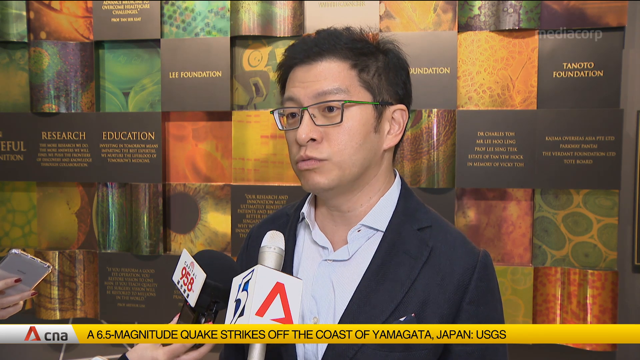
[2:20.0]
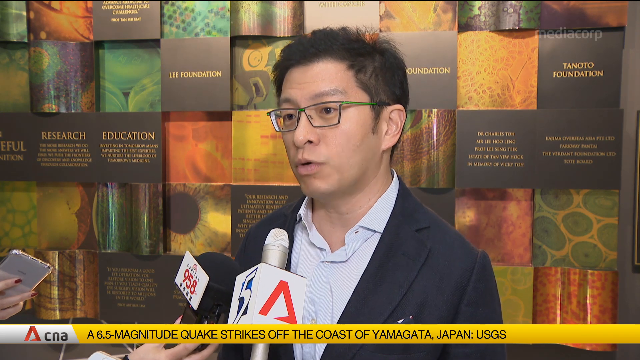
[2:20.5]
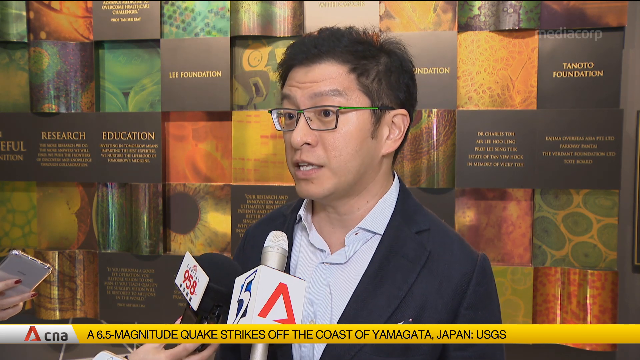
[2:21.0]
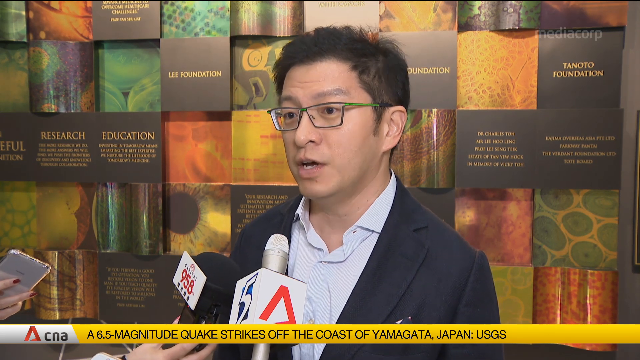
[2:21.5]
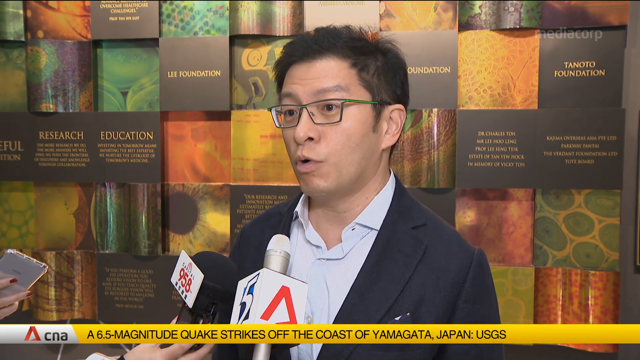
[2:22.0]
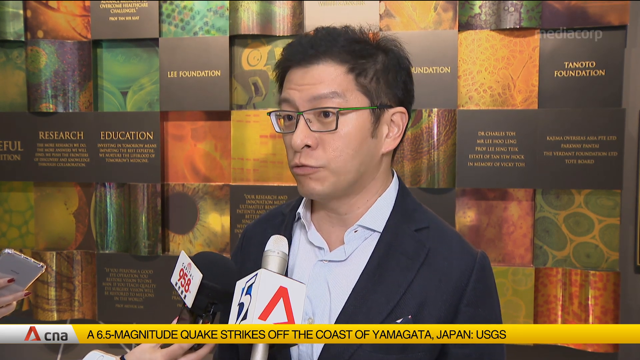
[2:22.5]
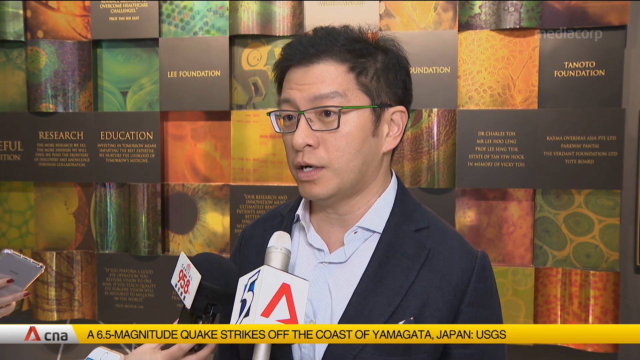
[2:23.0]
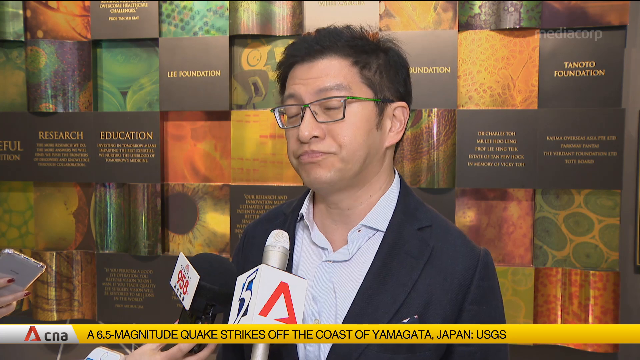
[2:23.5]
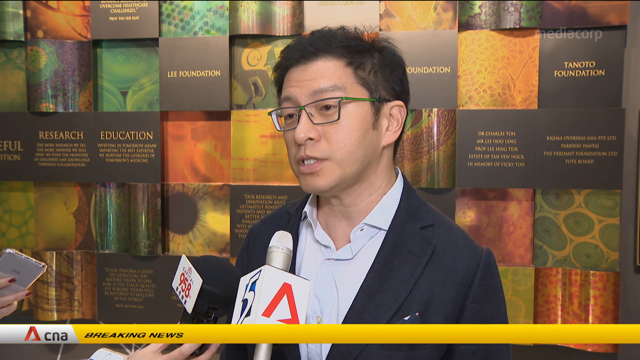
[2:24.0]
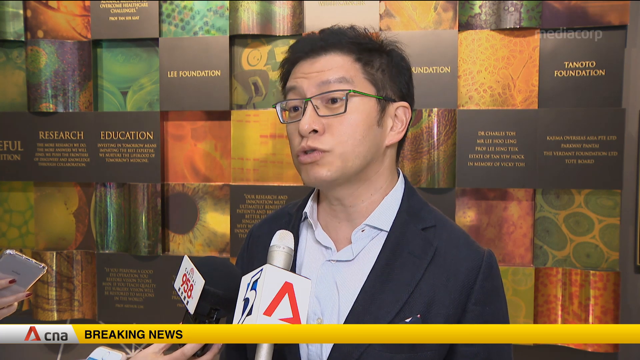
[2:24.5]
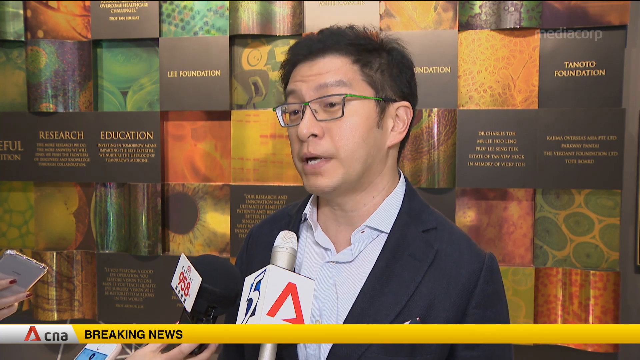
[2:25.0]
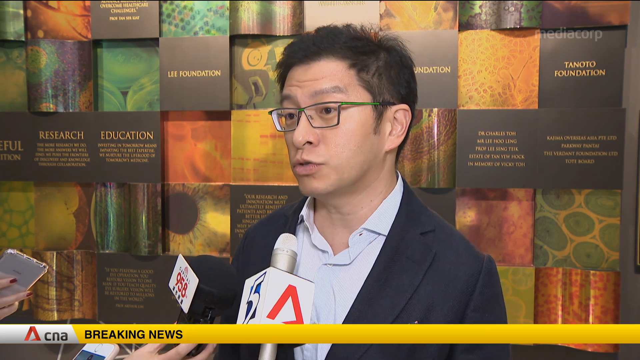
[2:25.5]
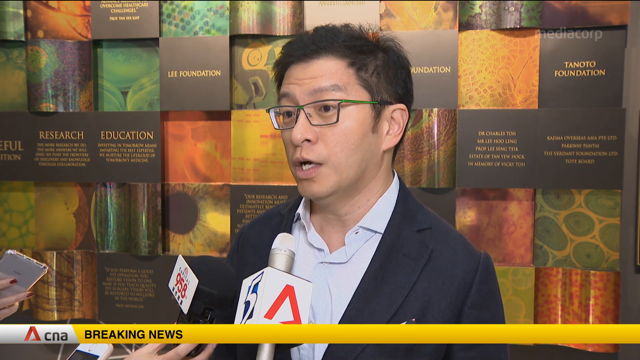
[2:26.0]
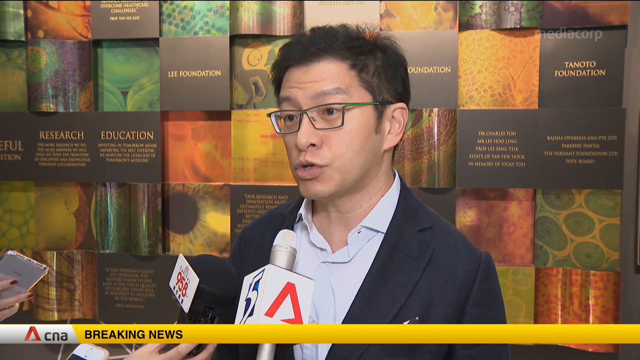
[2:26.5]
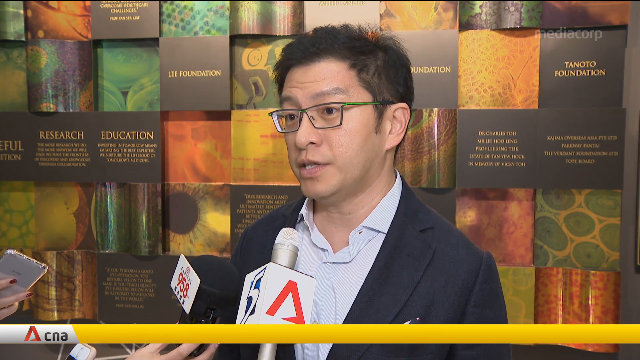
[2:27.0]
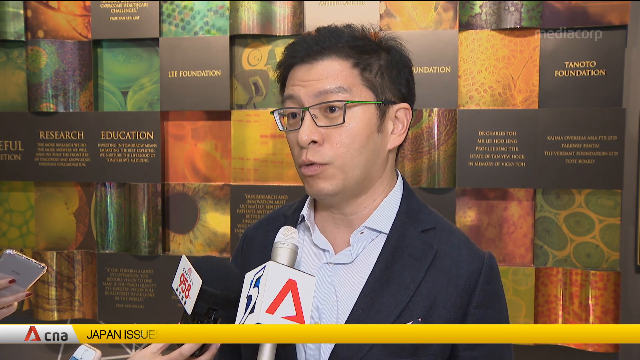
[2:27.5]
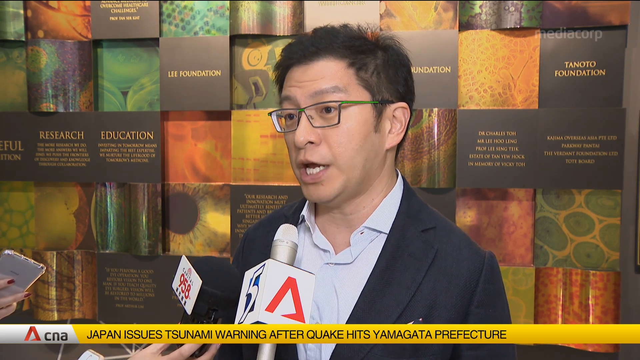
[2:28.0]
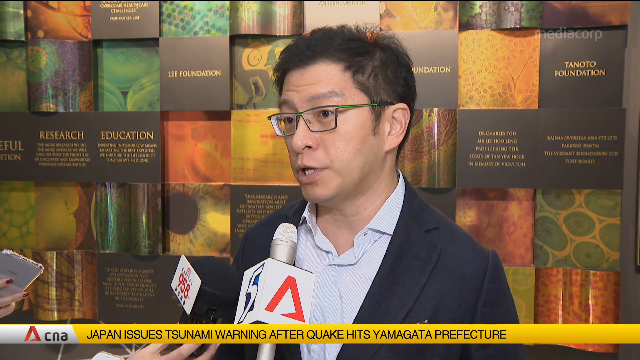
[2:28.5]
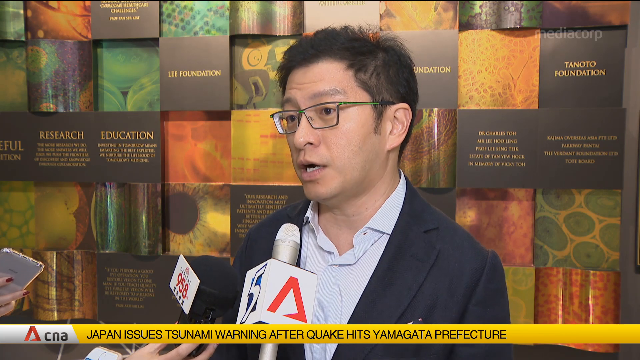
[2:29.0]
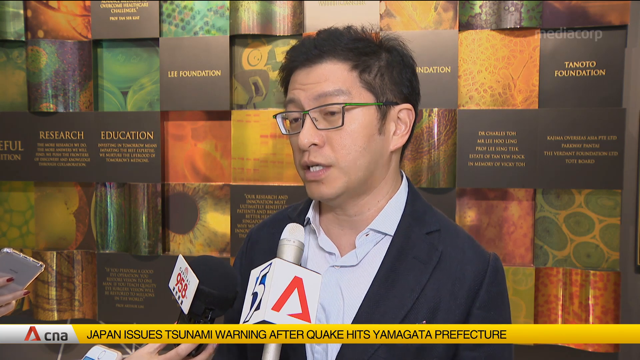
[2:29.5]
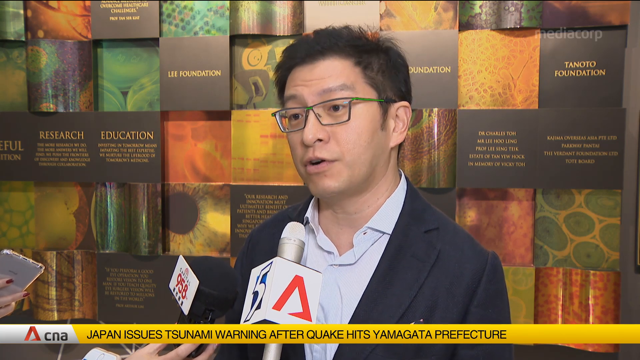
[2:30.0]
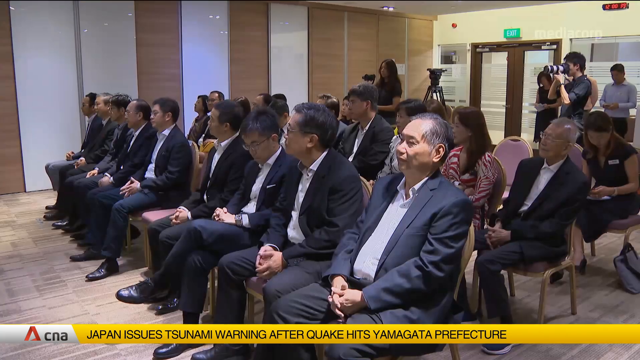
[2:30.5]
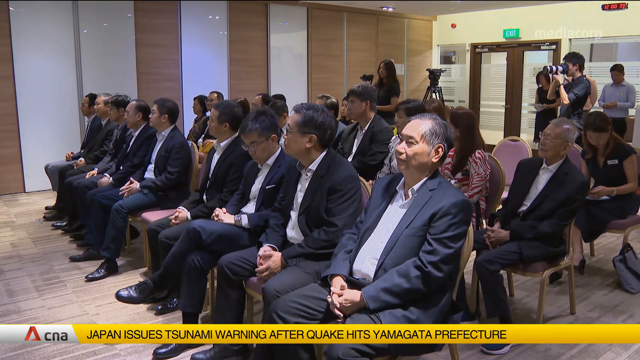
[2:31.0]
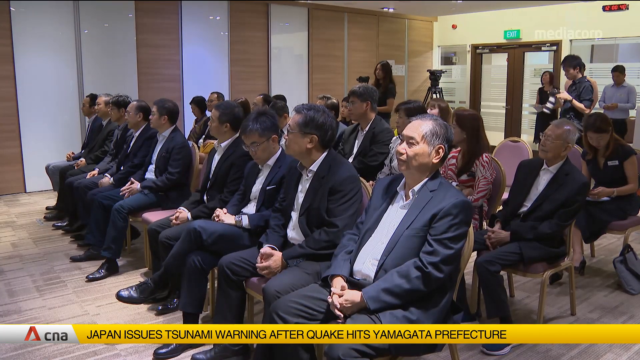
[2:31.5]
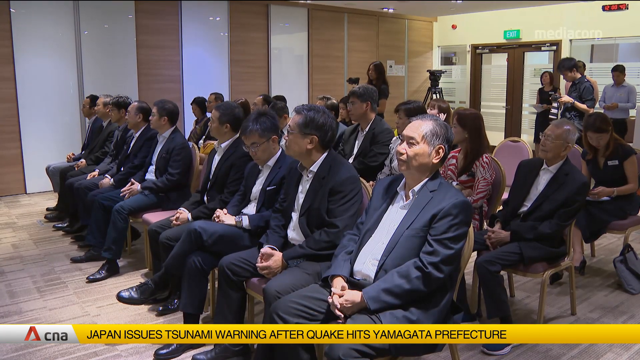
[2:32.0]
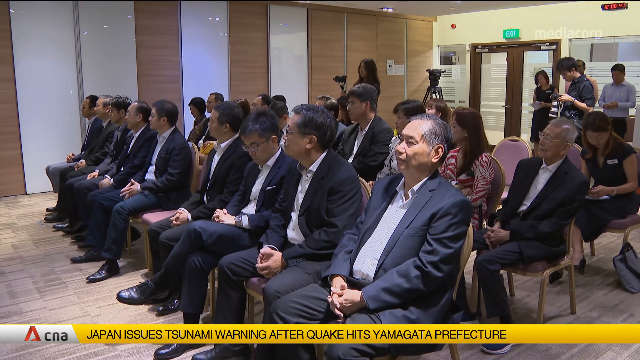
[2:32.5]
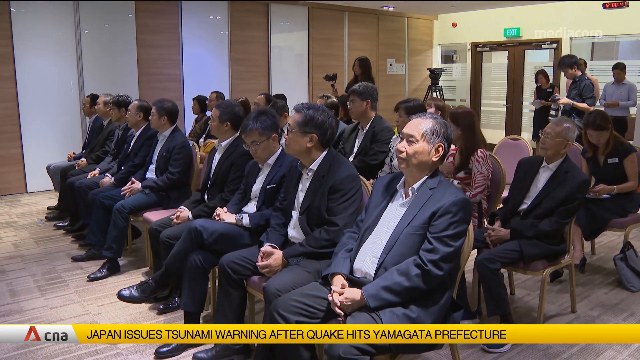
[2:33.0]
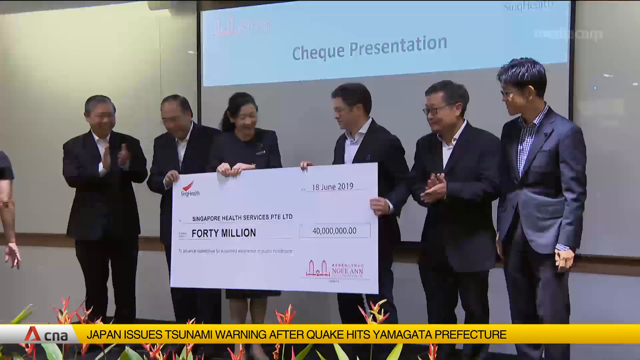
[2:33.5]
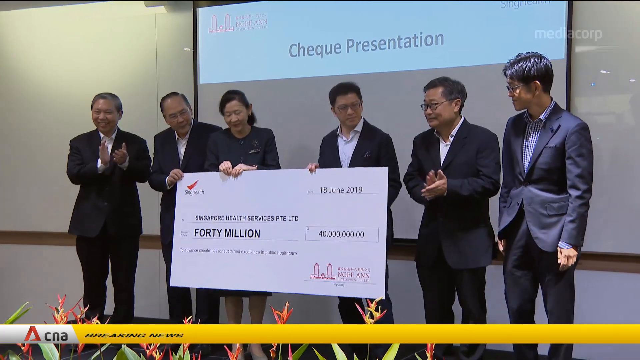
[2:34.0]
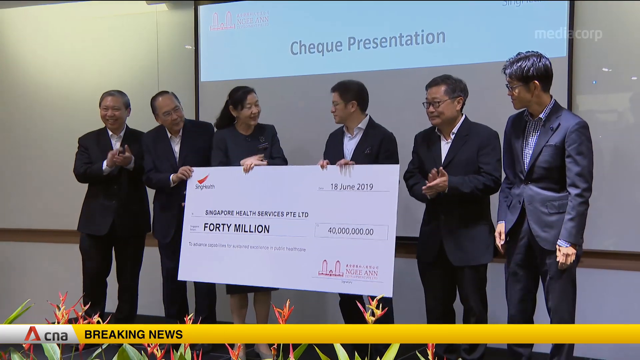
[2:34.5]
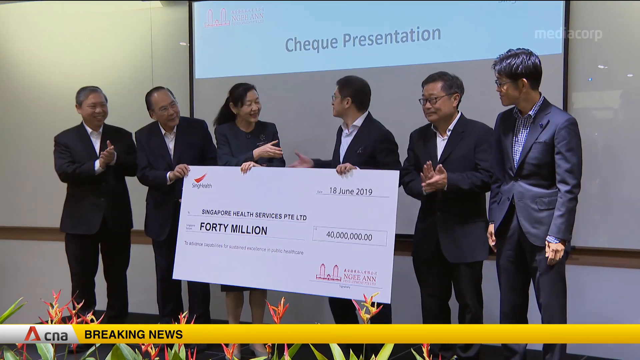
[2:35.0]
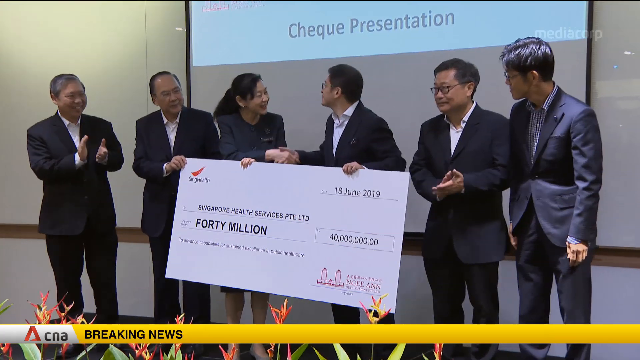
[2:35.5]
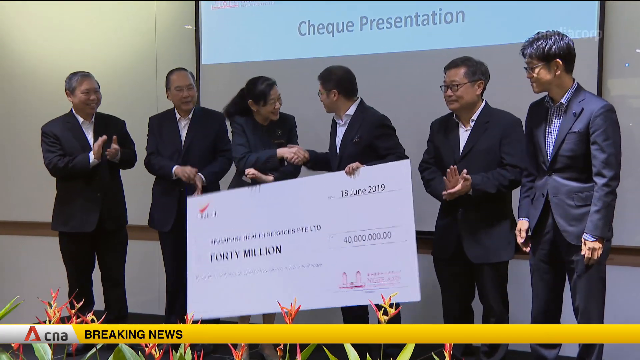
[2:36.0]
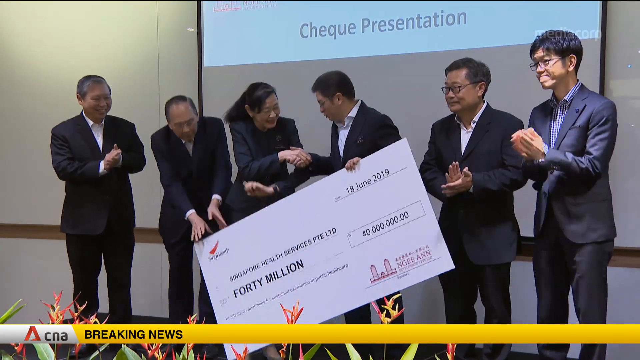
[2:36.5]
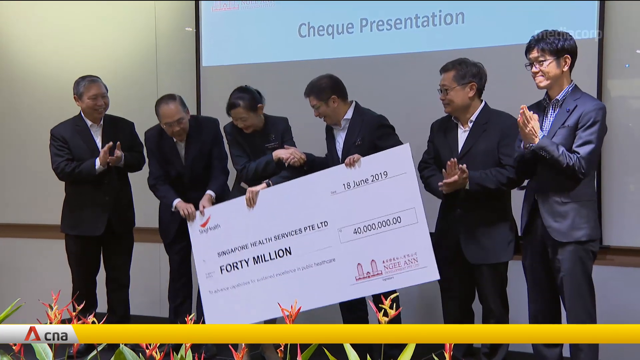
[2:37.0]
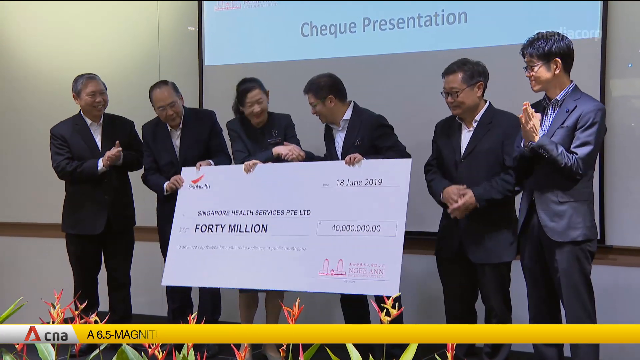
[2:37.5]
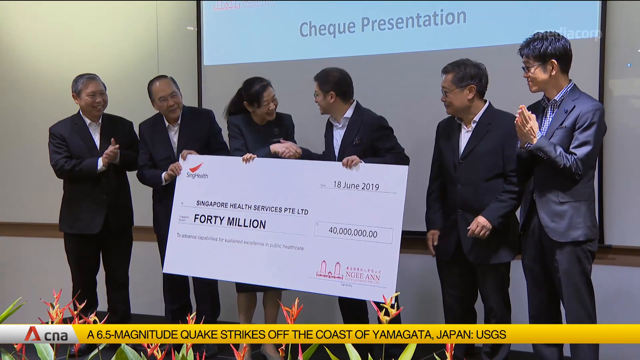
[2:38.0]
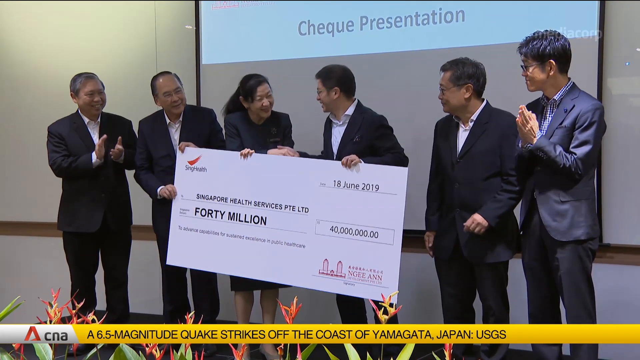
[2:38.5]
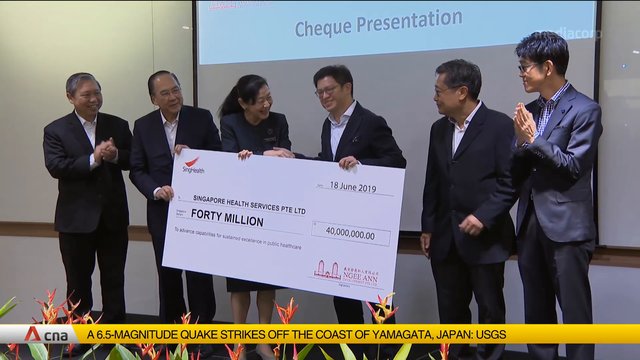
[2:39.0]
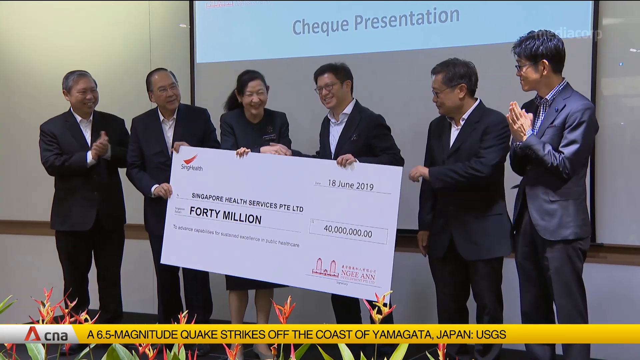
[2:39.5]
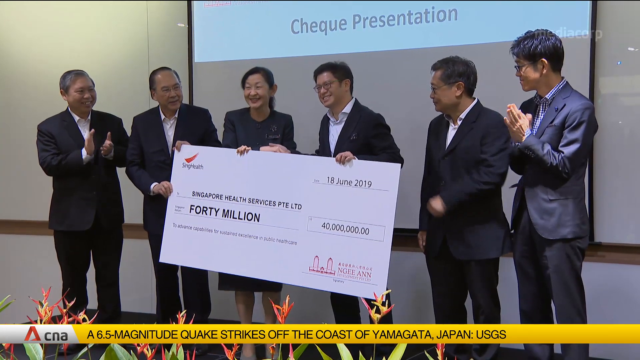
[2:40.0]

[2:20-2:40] In the center, apparently an Asian man, seen from the center of his chest up, is being interviewed, with two microphones in front of him. He wears a dark suit jacket and a white dress shirt unbuttoned at the top, and has medium-length brown hair and thin-frame glasses. He faces somewhere around 6:30 and has a very serious expression as he talks. The view switches to a small group of people in three rows, starting about 75 percent of the way over from the left at the bottom and going toward about the 10:30 direction, up and left; they all seem to be Asian. It then switches to six people, all Asian and in business attire, standing in front of a projection screen reading "check presentation" at the top. They hold a giant publicity-style check with "40 million dollars" on it, and one or two people are shaking hands.